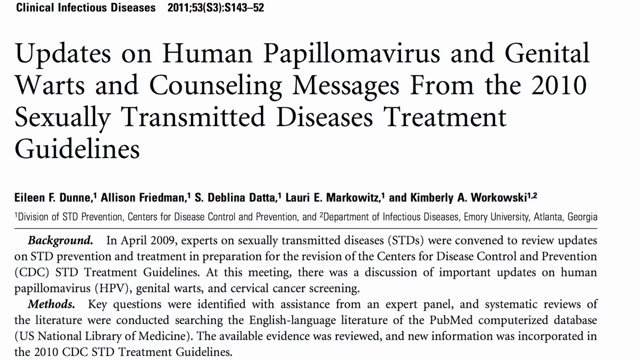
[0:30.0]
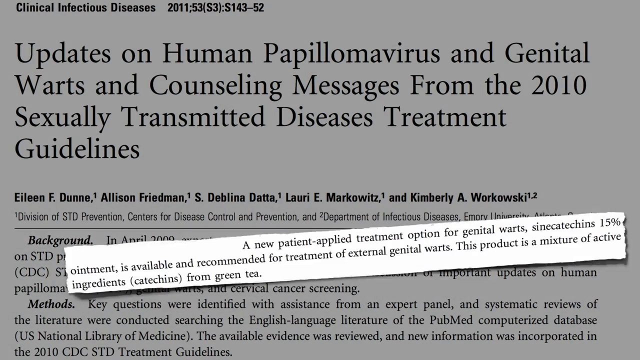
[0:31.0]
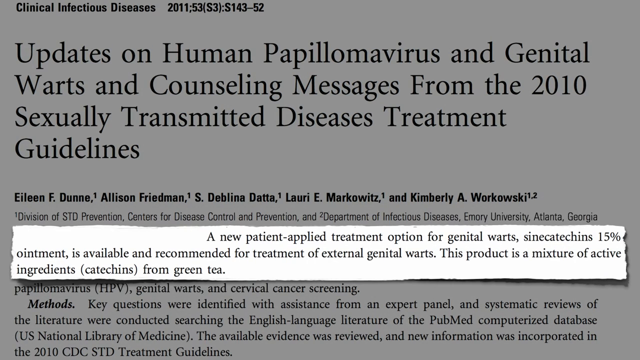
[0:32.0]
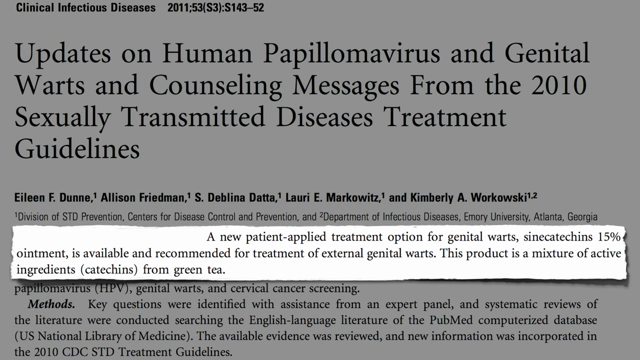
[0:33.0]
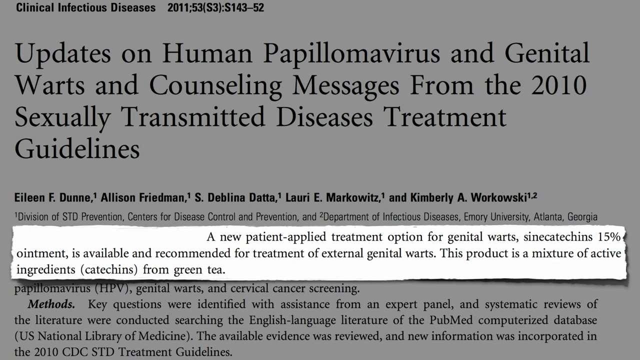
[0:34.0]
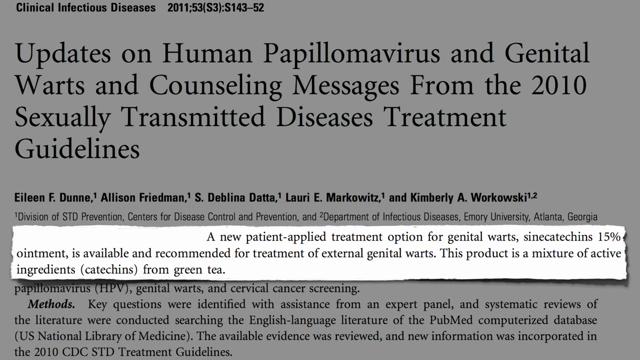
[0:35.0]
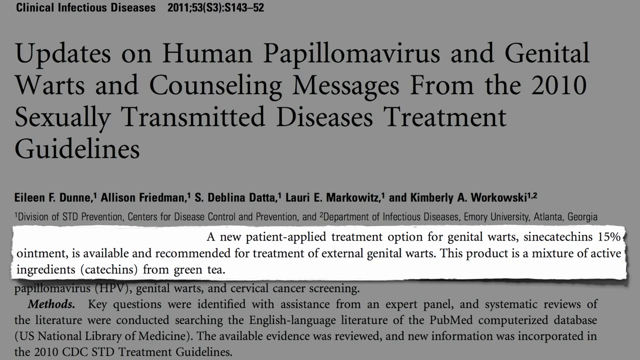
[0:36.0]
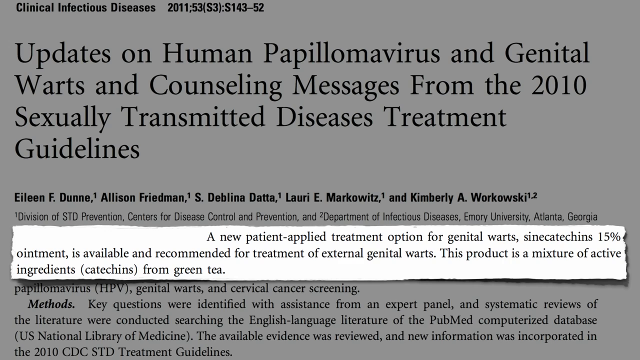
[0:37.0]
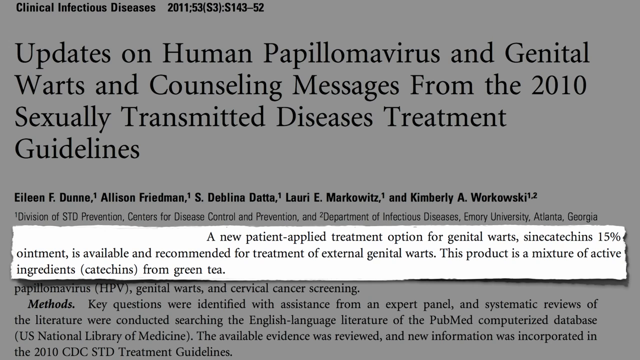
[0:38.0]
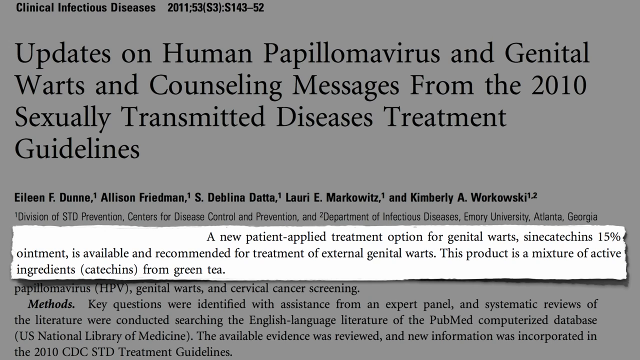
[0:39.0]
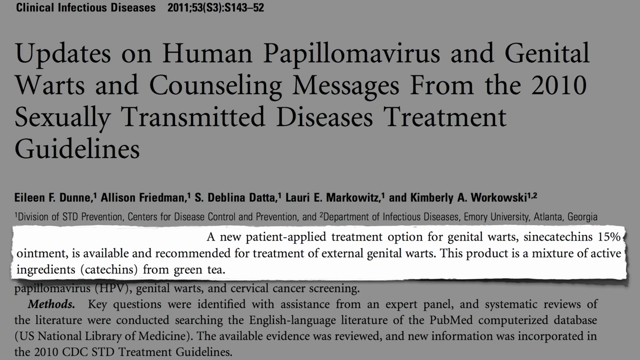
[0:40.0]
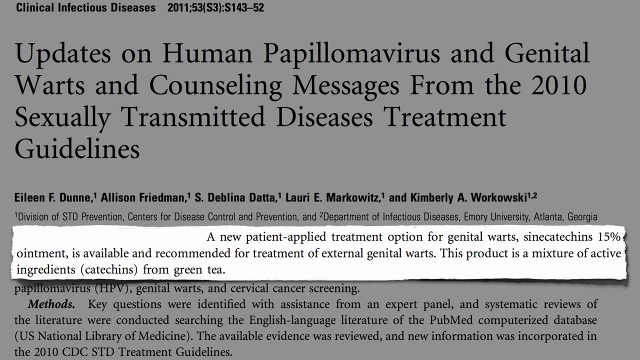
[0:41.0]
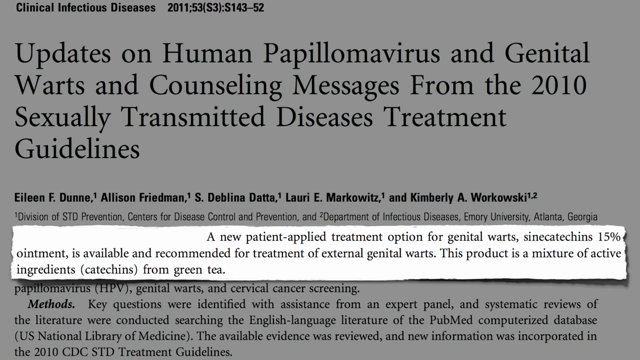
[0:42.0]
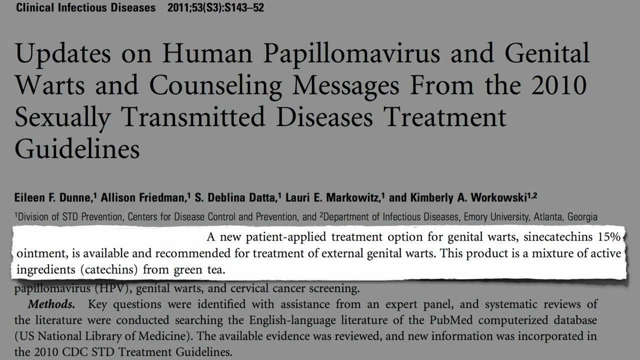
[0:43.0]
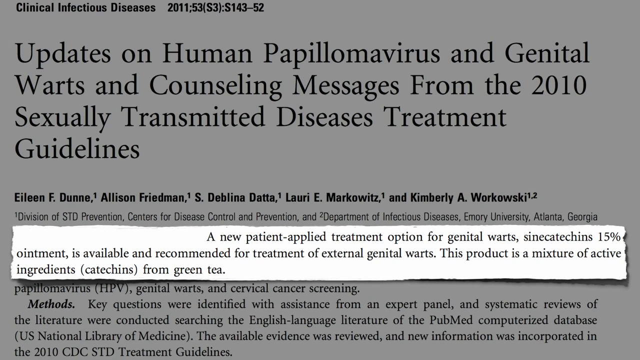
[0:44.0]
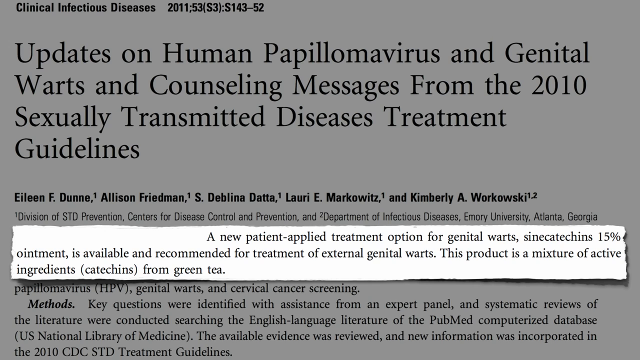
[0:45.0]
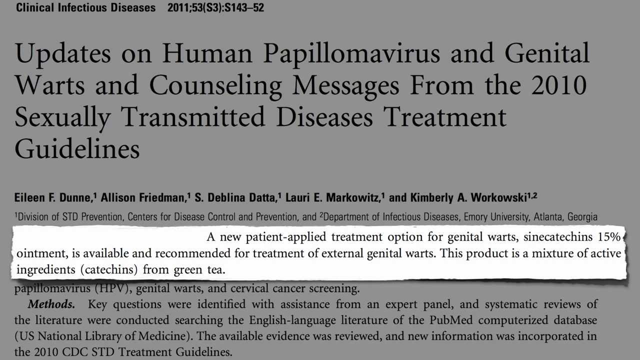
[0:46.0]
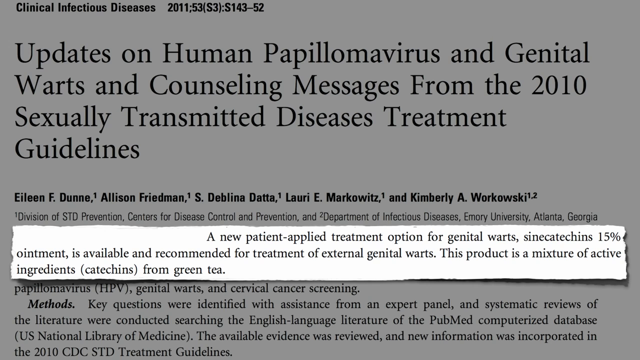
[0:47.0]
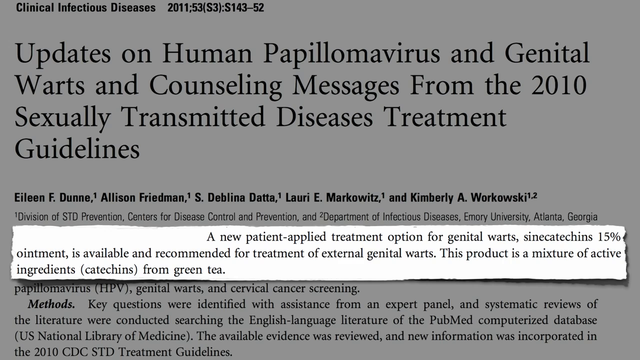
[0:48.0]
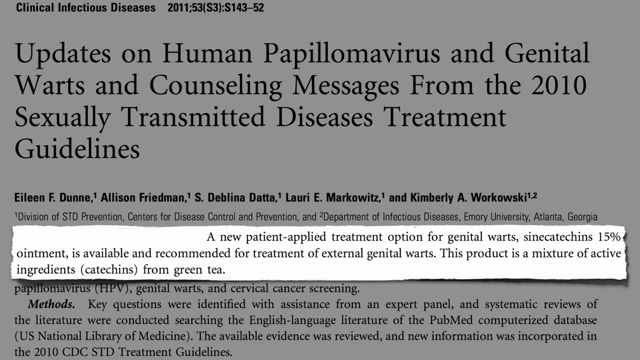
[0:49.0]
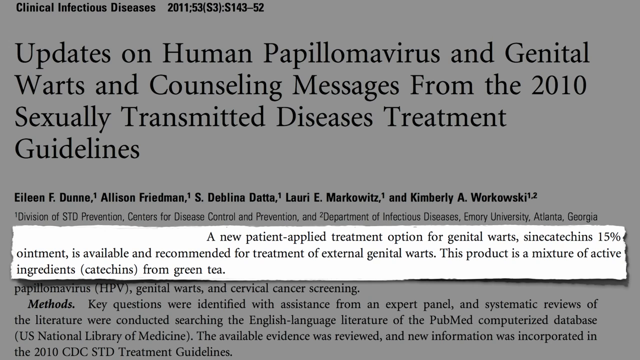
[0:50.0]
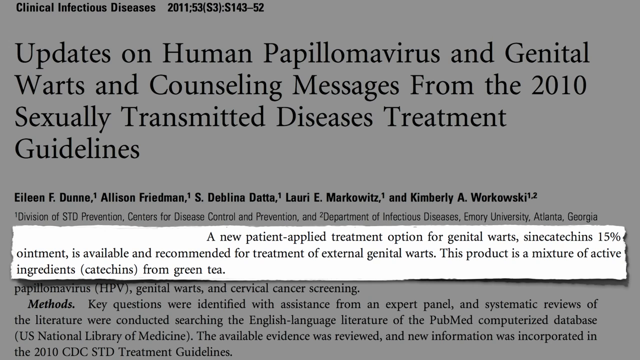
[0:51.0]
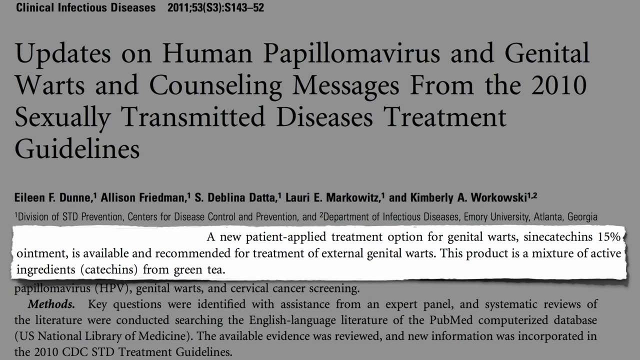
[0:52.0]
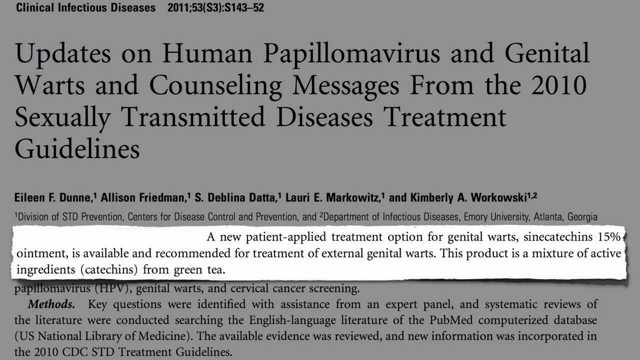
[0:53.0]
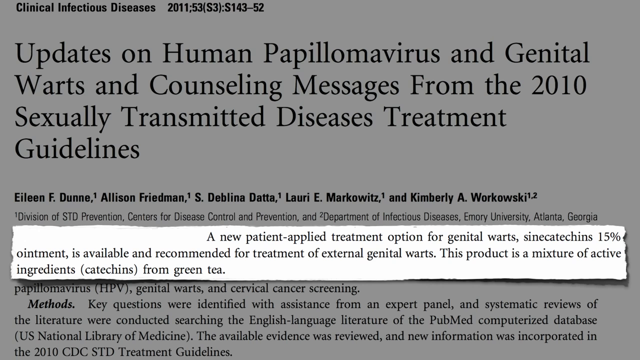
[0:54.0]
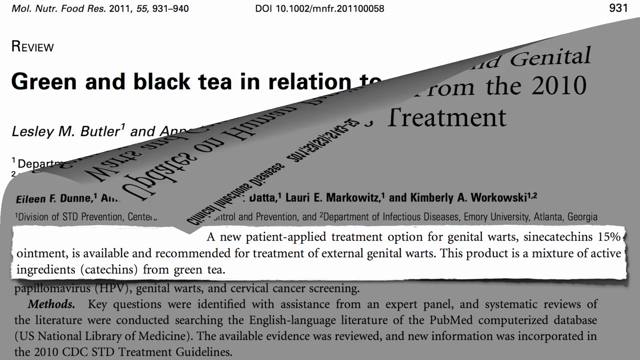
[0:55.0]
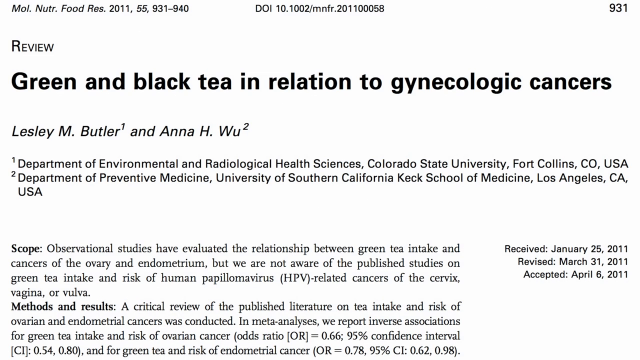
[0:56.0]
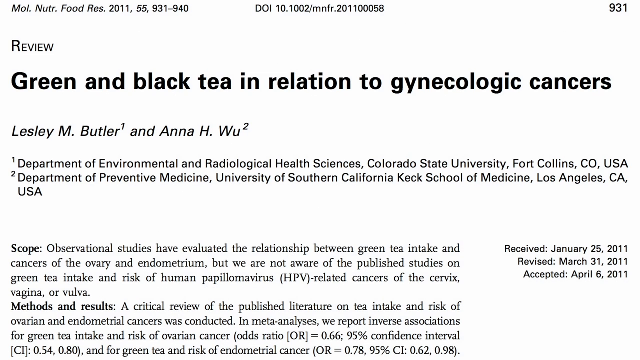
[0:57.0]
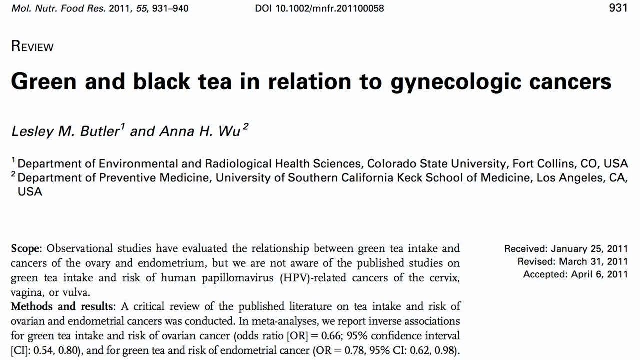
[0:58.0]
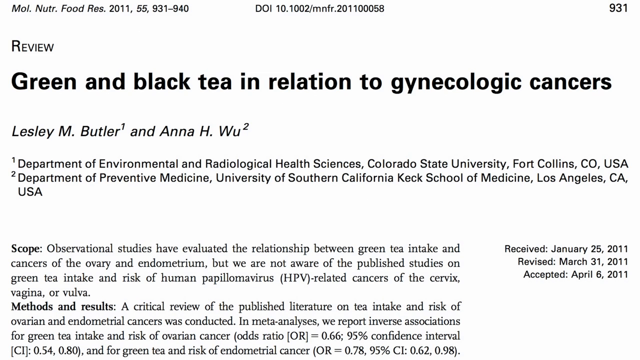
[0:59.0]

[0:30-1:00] The article is used to reveal a quote in the same way as before, in the form of a ripped-off piece of paper. The quote reads, "A new patient-applied treatment option for genital warts, Sinecatechin's 15% ointment, is available and recommended for treatment of external genital warts. This product is a mixture of active ingredients (catechins) from green tea." The quote is not in the middle of the screen but in the lower half, overlaying the background of the article. That article is then peeled away, revealing the next one, titled "Green and Black Tea in Relation to Gynecologic Cancers." It is a review and shows some of the authors, the scope, and the methods. This article is also from 2011 and is an American review from a nutritional food journal.